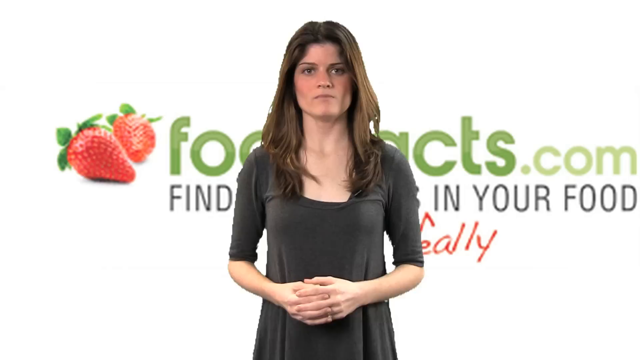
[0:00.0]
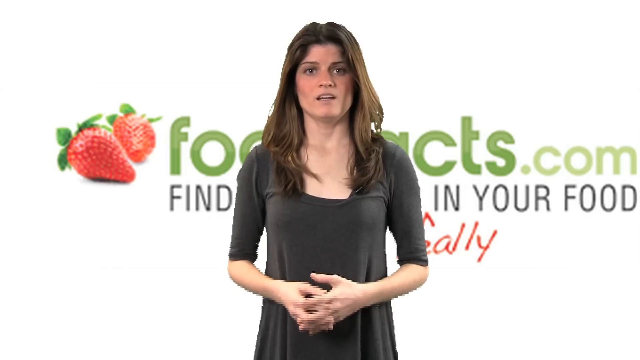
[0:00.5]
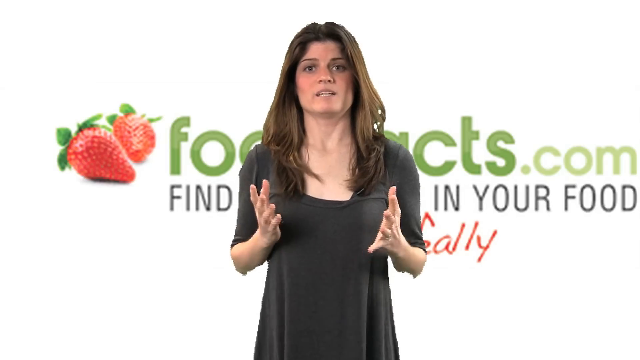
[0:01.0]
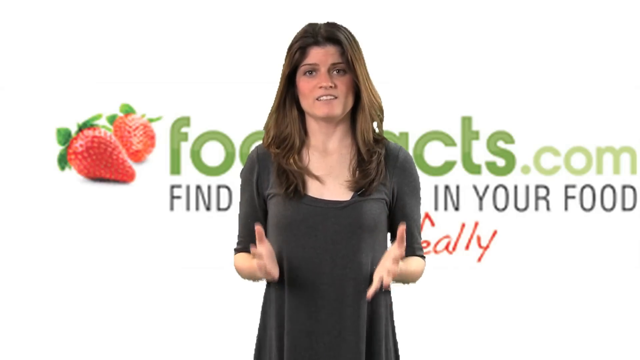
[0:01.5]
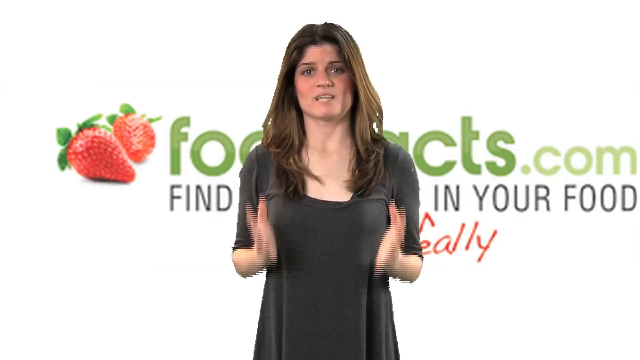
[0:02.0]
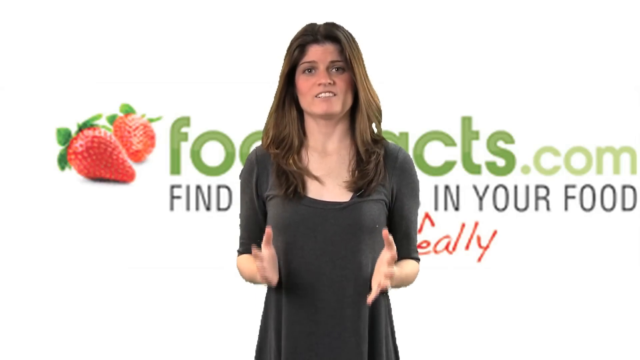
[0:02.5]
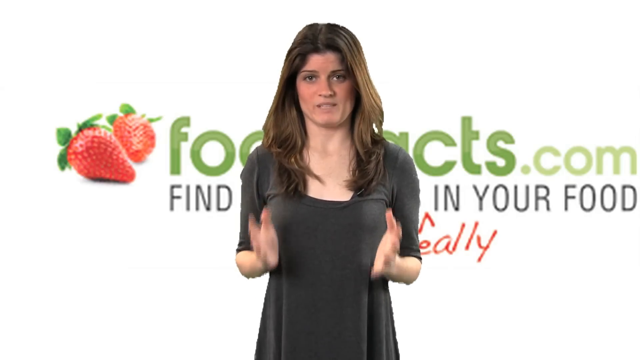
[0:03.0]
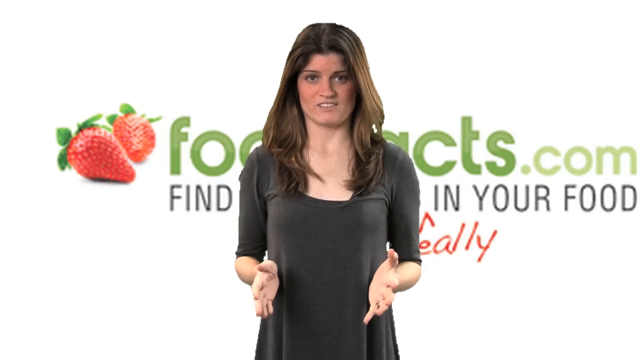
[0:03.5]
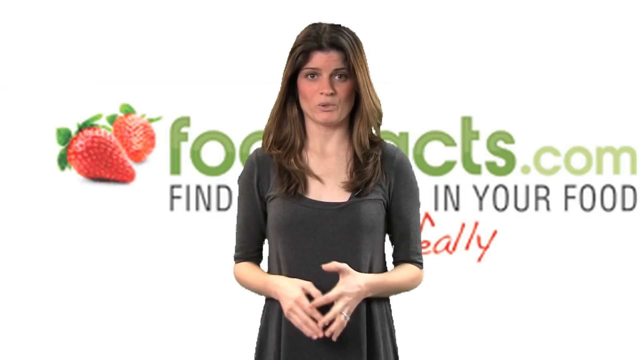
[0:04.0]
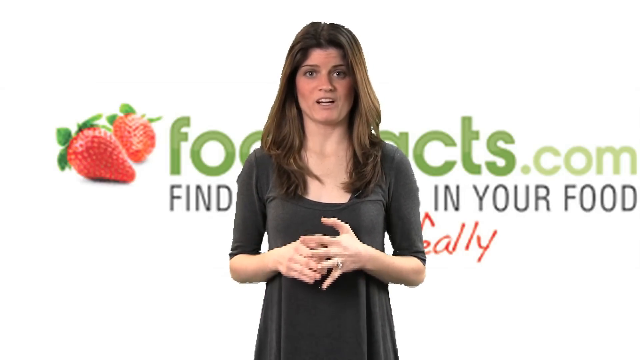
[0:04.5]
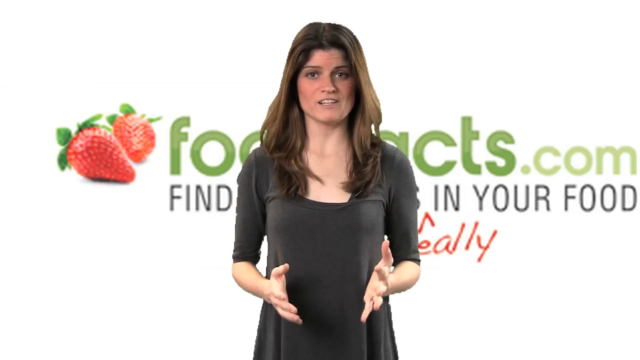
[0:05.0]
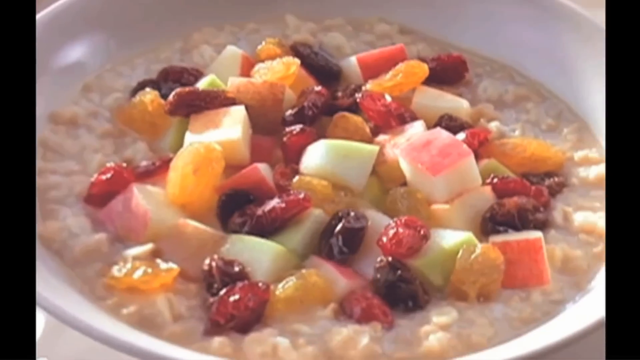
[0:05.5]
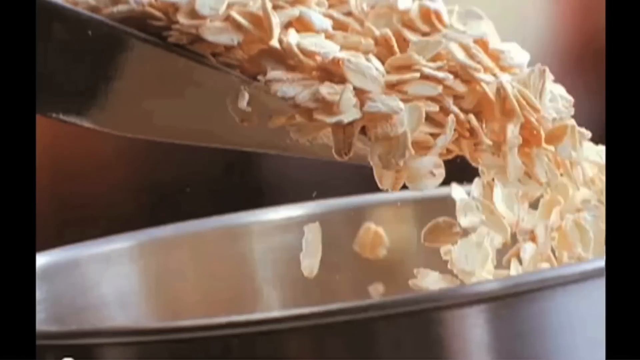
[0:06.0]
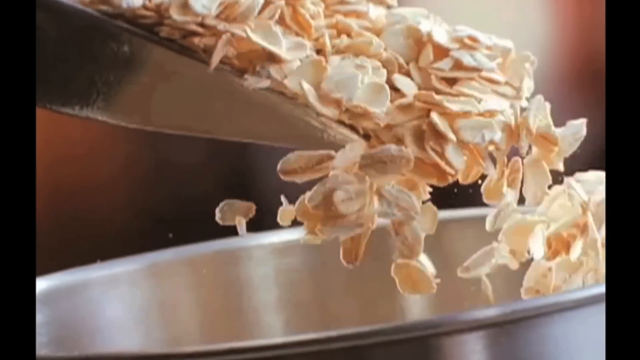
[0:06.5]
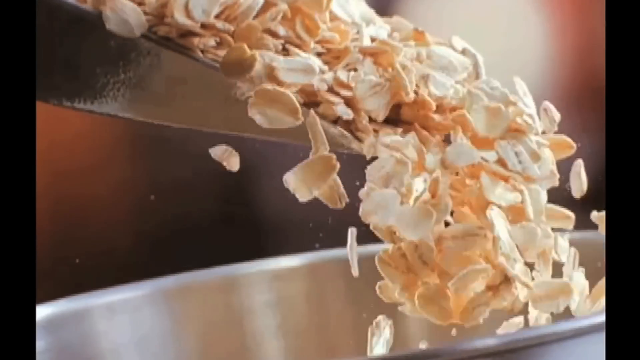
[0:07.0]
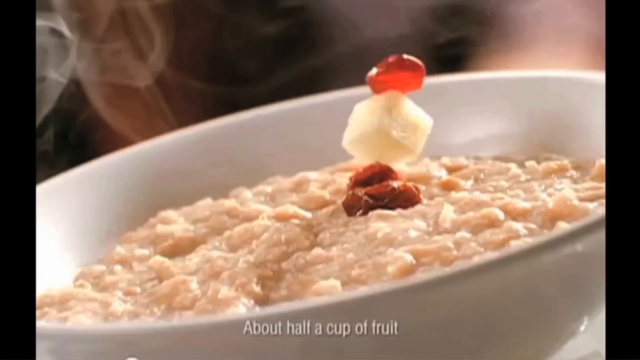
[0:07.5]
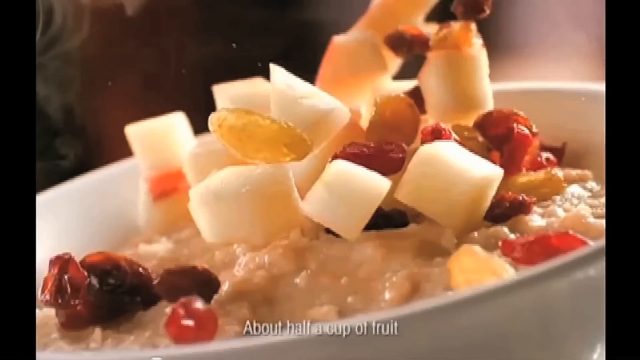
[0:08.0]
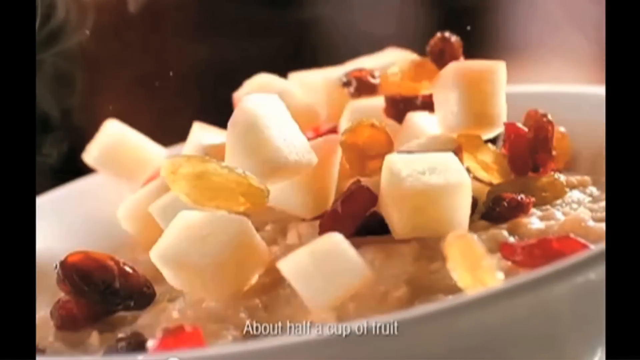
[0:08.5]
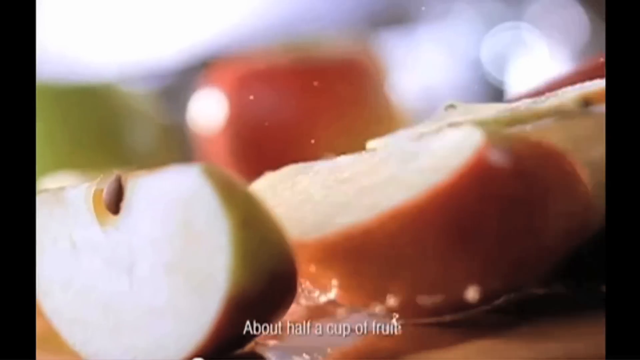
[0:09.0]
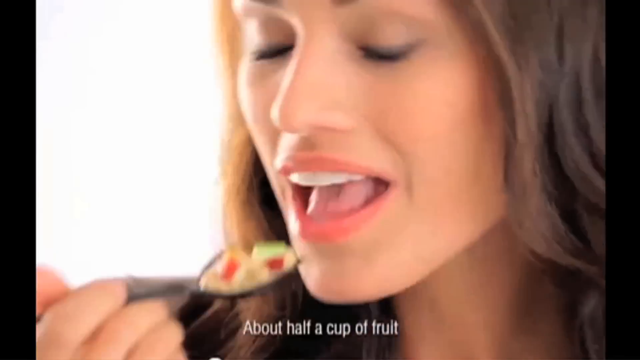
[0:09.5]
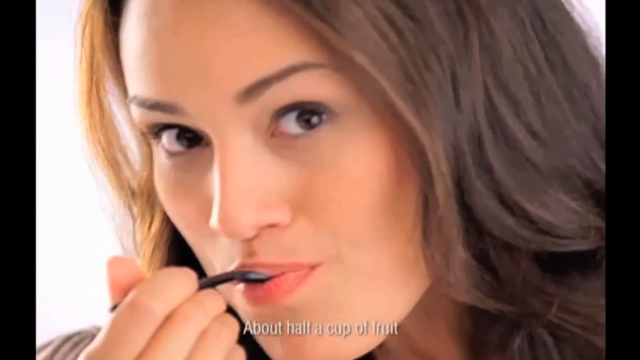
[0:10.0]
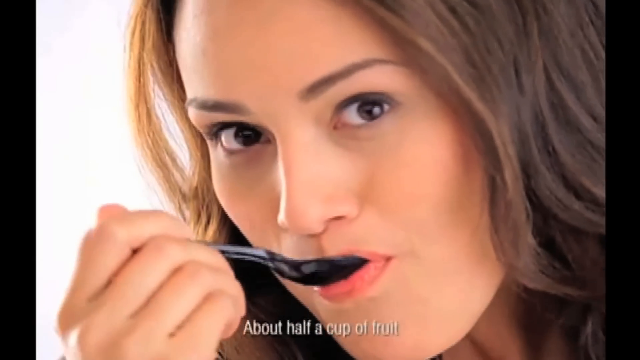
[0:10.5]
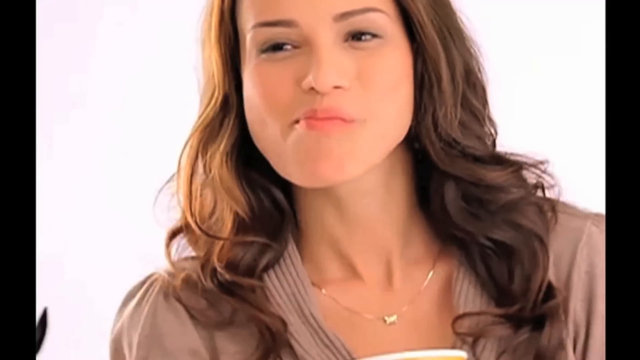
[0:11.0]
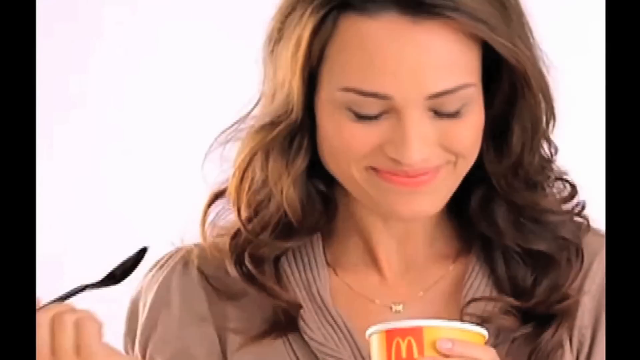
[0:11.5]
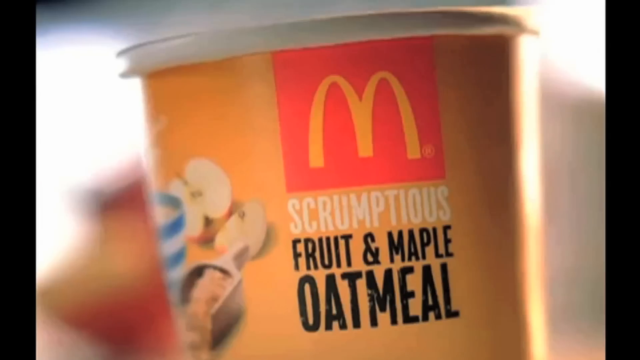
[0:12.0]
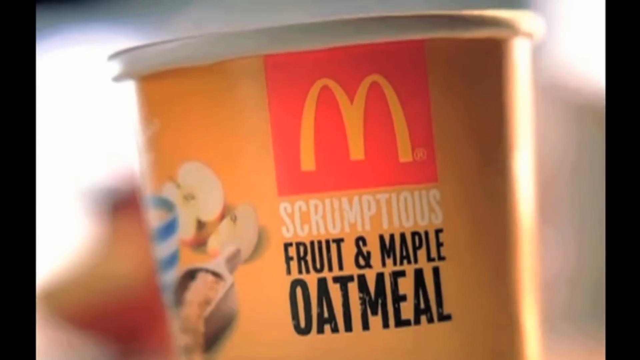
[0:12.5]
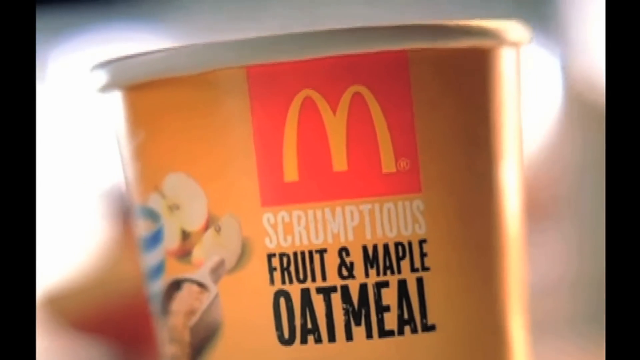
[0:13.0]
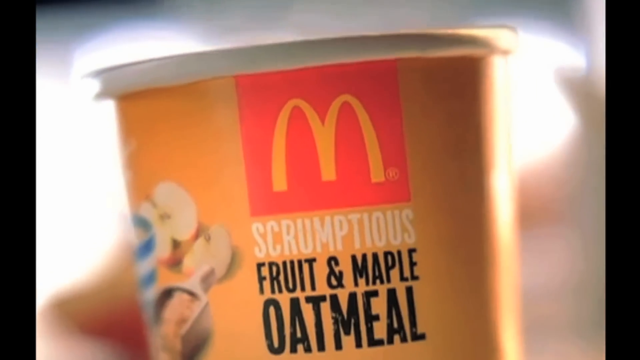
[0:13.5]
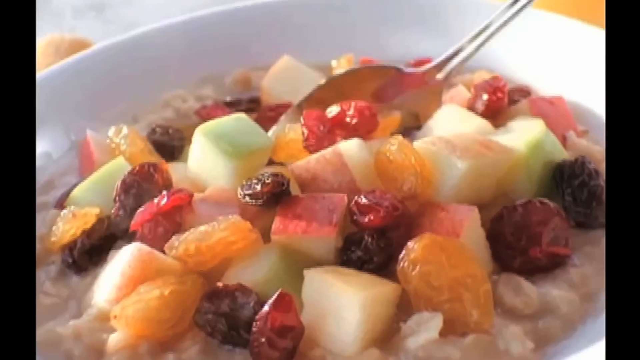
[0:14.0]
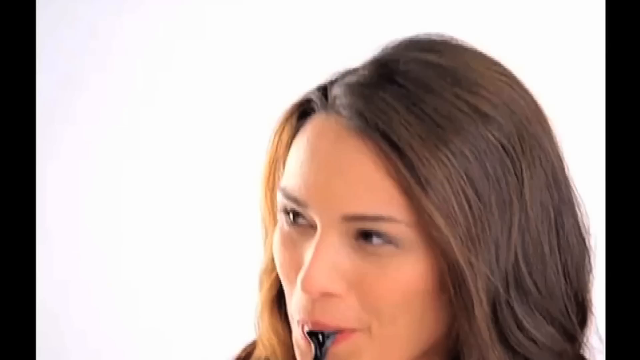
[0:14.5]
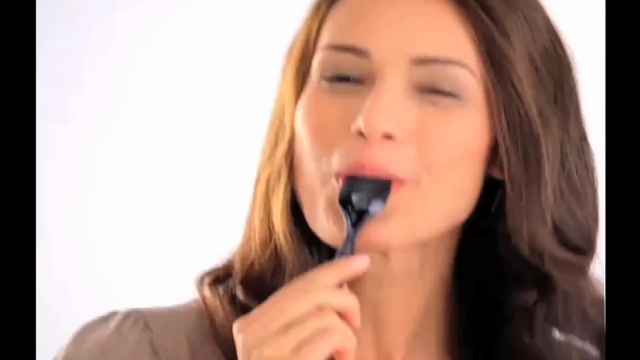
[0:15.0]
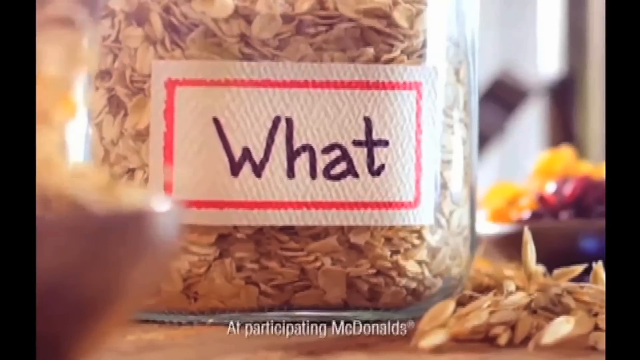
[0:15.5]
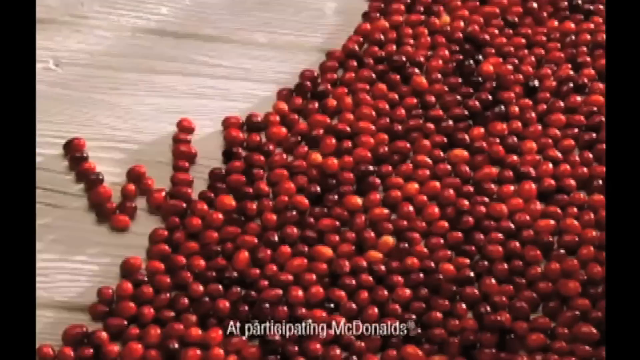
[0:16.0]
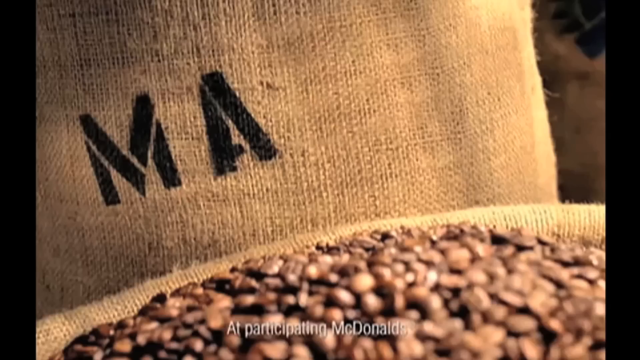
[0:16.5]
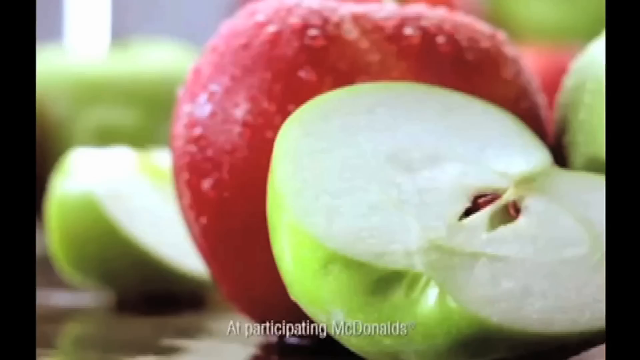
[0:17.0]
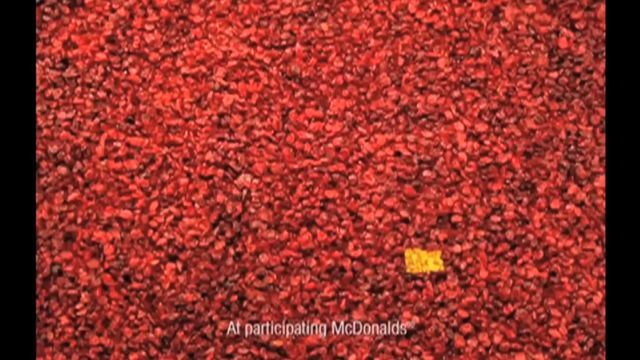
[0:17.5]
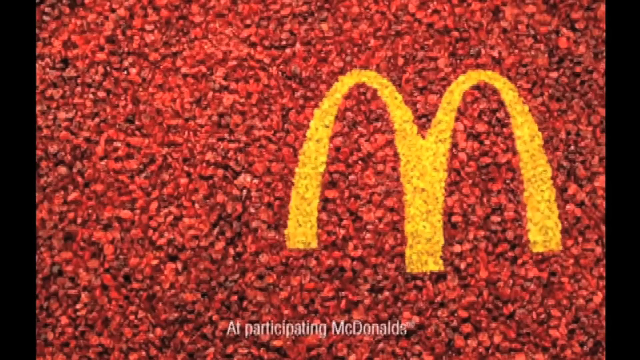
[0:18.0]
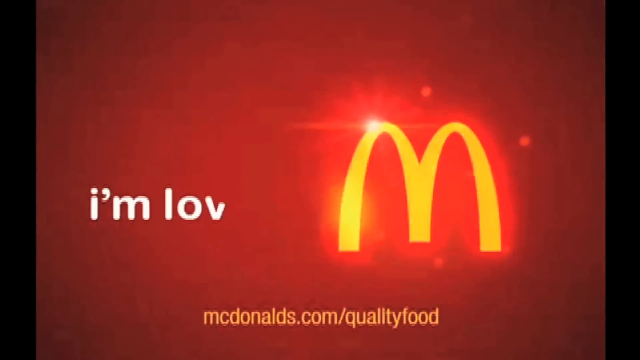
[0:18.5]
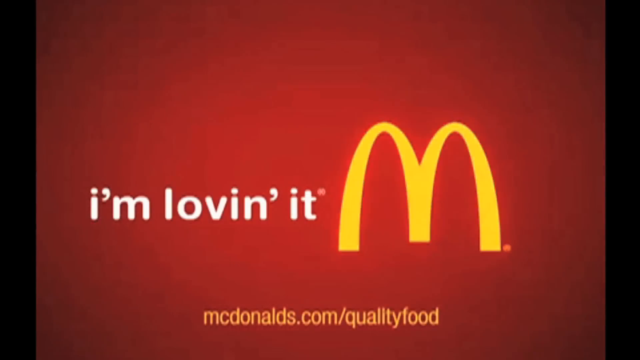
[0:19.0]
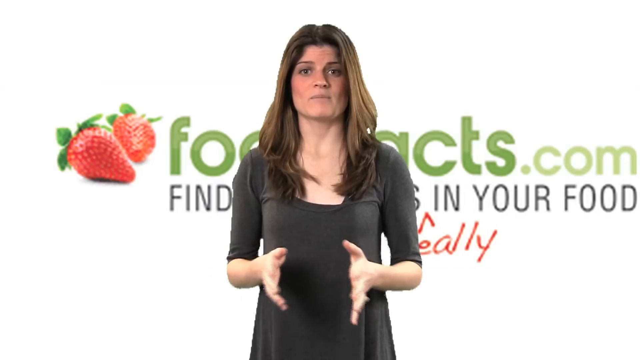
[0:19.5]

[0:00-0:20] A woman with white skin and long brown hair reaching her chest stands in front of a green screen, wearing a half-sleeved dark grey t-shirt with a square neck. The background shows what looks like a logo with strawberries in it. She speaks to the camera, gesturing with both hands. The next shot shows some sort of porridge with lots of fruit in it, such as oranges, apples and berries. What seems to be an ad shows fruit being poured on top of the oats with a scoop, and the porridge is steaming hot. A woman eats it with a black spoon while looking at the camera, her facial expressions showing that she likes it and is enjoying the meal. The next shot shows what looks like a cup with the McDonald's logo and the words "scrumptious fruit and maple oatmeal". Then the oatmeal is scooped up with a silver spoon while several graphics appear and text reads "what we're made of". The McDonald's logo animates in, with "I'm loving it" written next to it on the left.